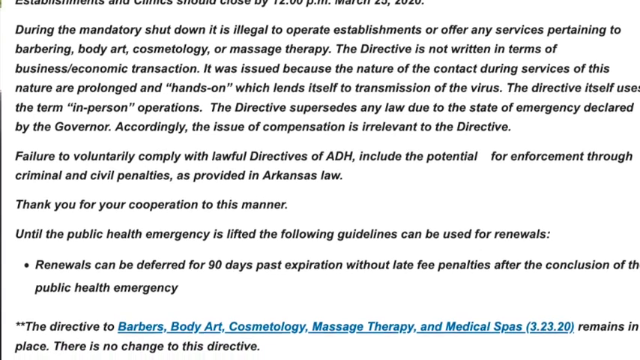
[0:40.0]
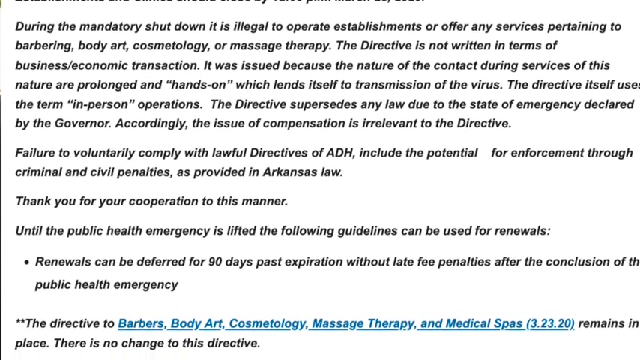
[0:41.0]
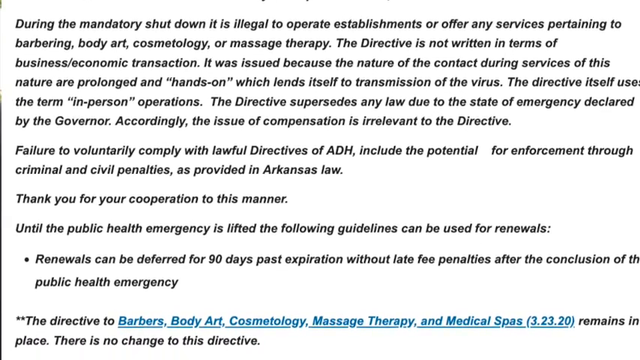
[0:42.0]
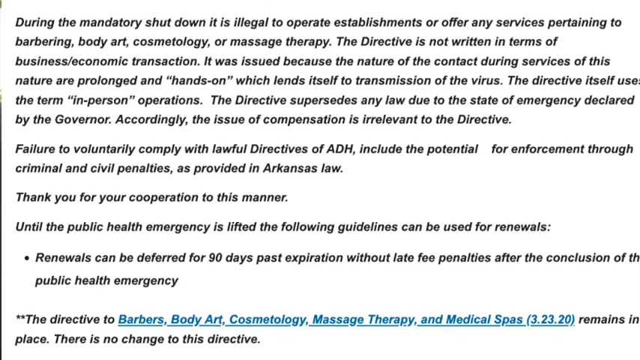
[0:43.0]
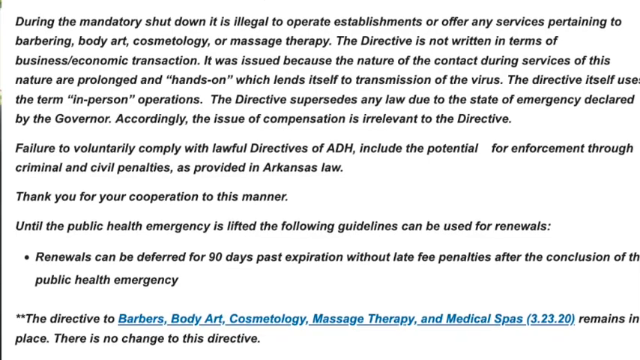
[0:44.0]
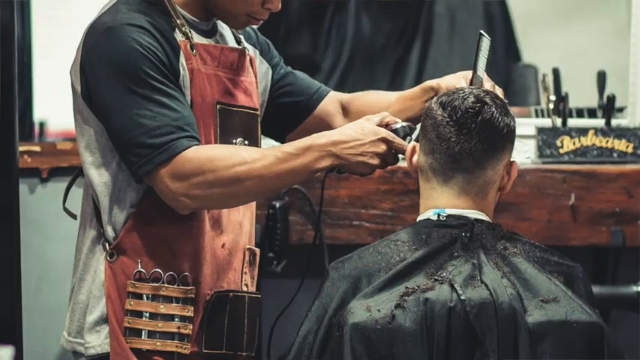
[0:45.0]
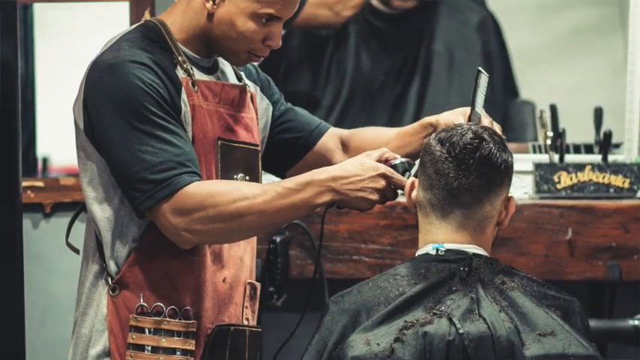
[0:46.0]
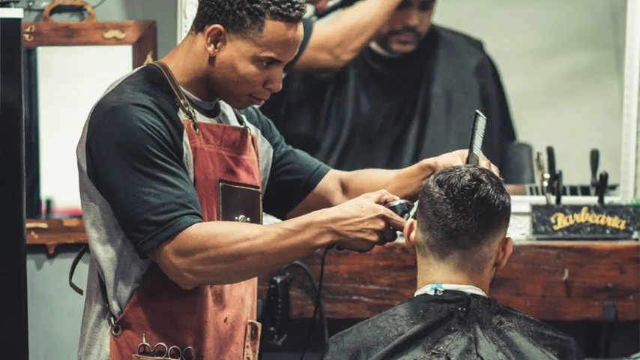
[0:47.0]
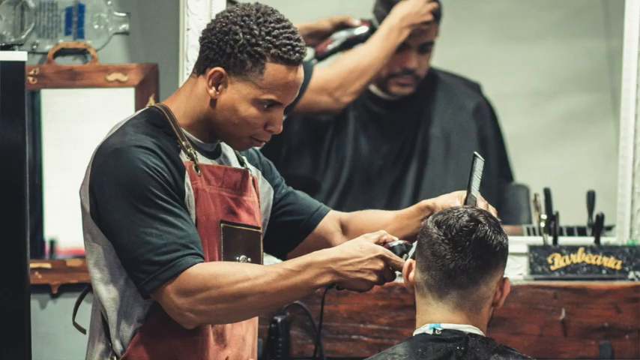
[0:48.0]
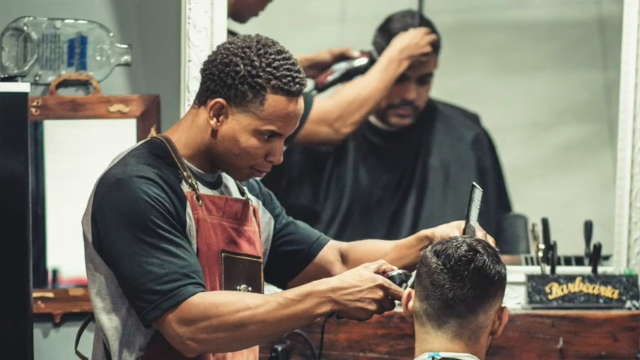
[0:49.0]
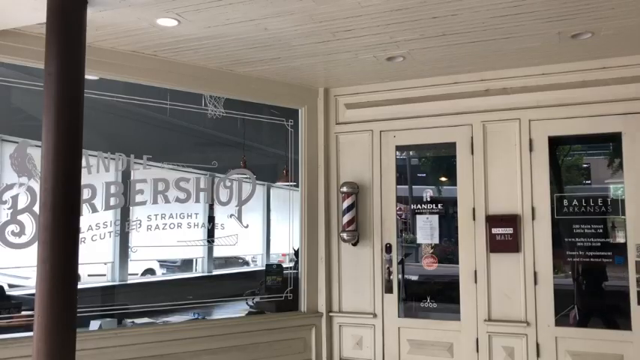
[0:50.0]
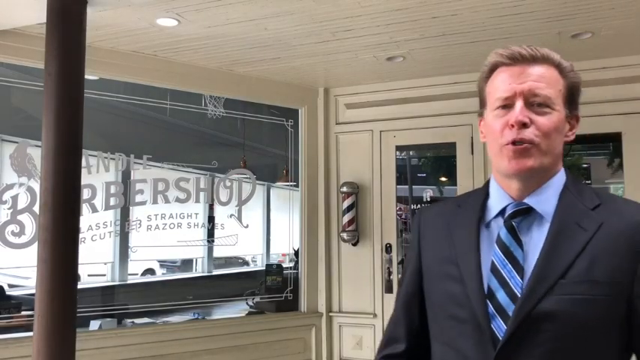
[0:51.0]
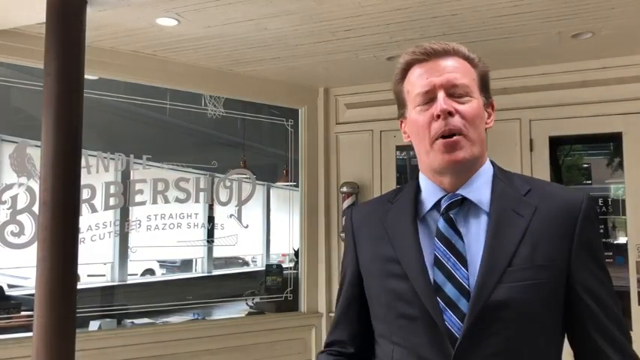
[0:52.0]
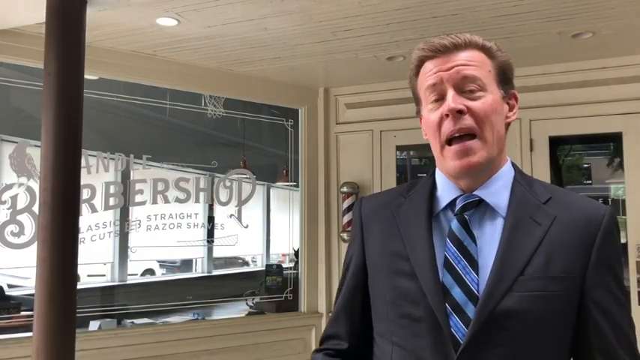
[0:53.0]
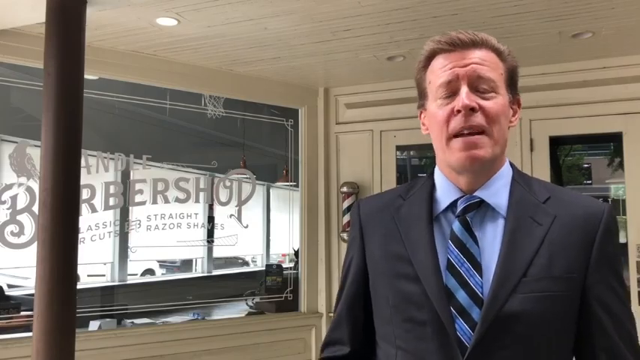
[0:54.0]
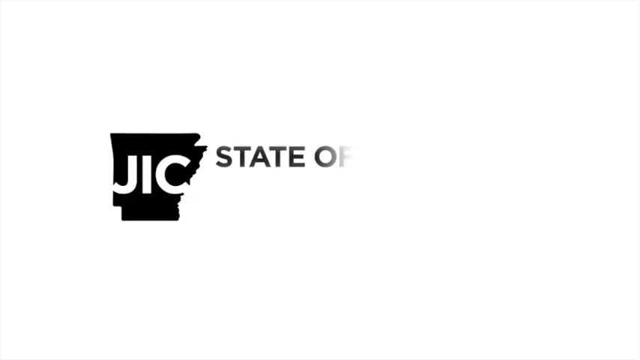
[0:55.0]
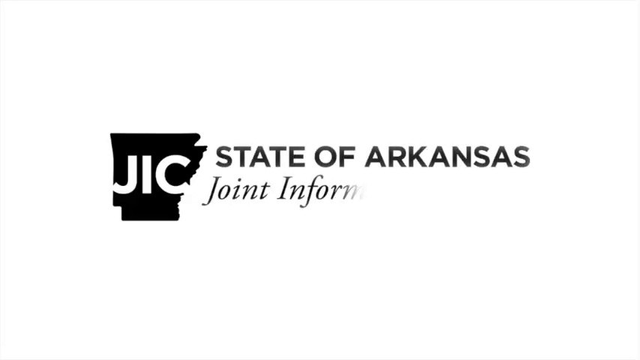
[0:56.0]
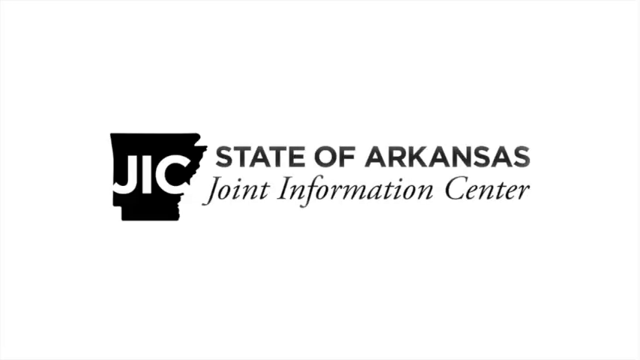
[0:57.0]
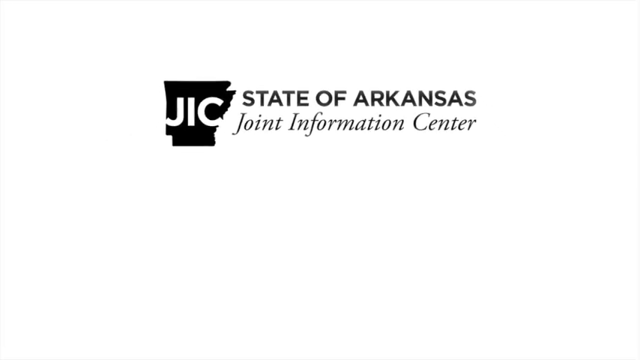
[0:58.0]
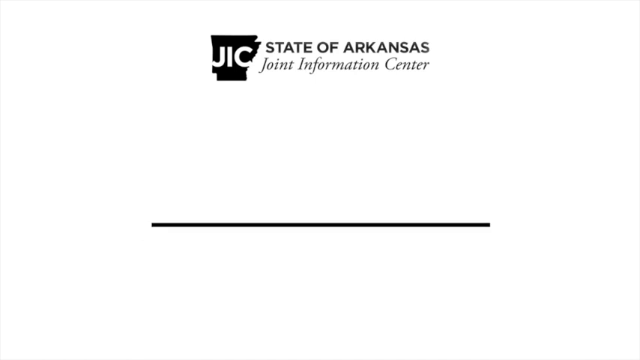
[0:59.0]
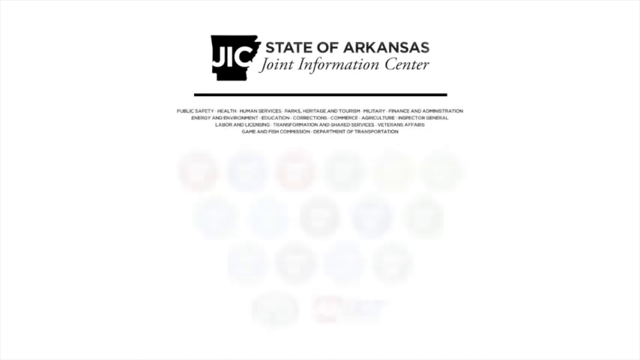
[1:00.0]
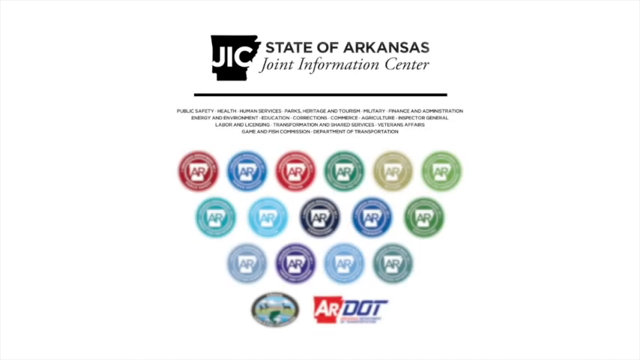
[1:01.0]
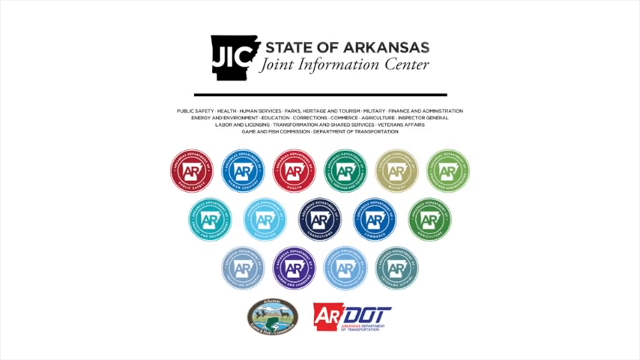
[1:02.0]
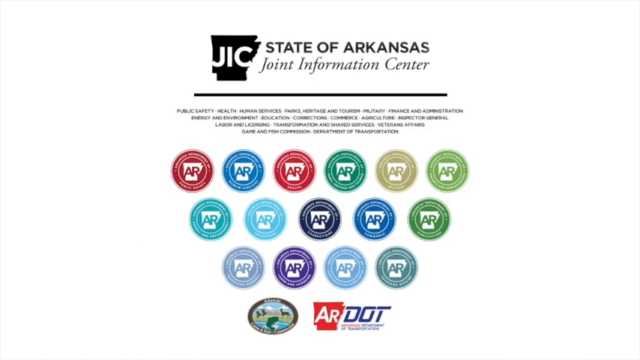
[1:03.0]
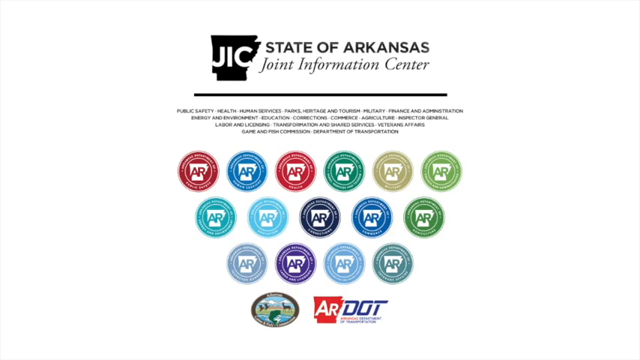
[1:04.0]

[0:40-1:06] A little more of the document is shown before it changes to a photograph of a black barber cutting a customer's hair with an automatic electronic shaver while holding a black comb in one hand. Next, the outside of a barbershop appears and the field reporter comes into view, standing on the right side. A large window to his left says "handle barbershop, classic straight haircuts and razor shaves". He speaks for a few seconds before it cuts to the ending credits: a white slide with the State of Arkansas Joint Information Center logo, a silhouette or black map of the State of Arkansas with "JIC" as a text overlay or outline on top of it. The view zooms out and shows the departments of the State of Arkansas: Public Safety, Health, Human Services, Parks, Heritage and Tourism, Military, Finance and Administration, Energy and Environment, Education, Corrections, Commerce, Agriculture, Inspector General, Labor and Licensing, Transformation and Shared Services, Veteran Affairs, Game and Fish Commission, and the Department of Transportation. Each has a seal in a different color with the State of Arkansas on it, except the Department of Transportation, which is not in seal form.